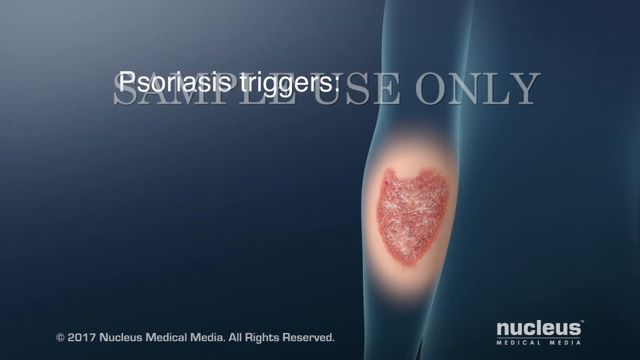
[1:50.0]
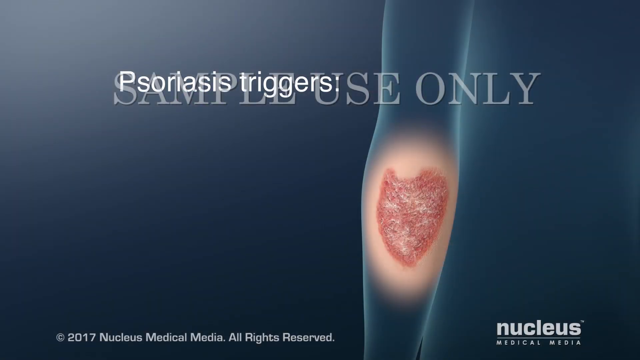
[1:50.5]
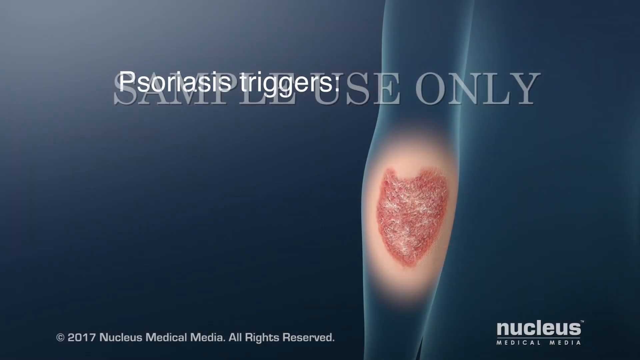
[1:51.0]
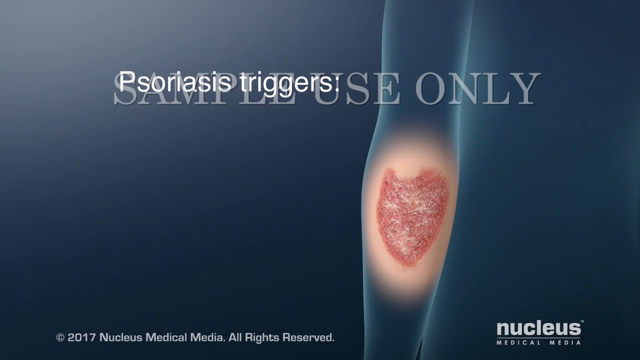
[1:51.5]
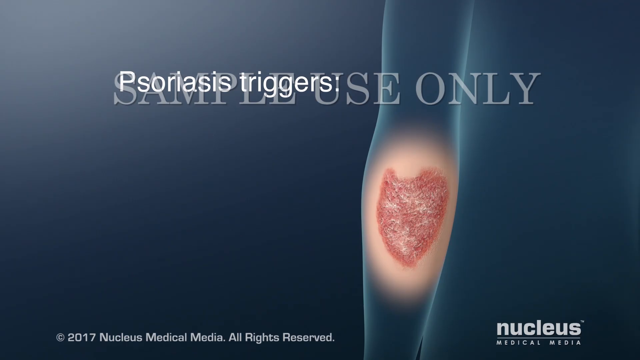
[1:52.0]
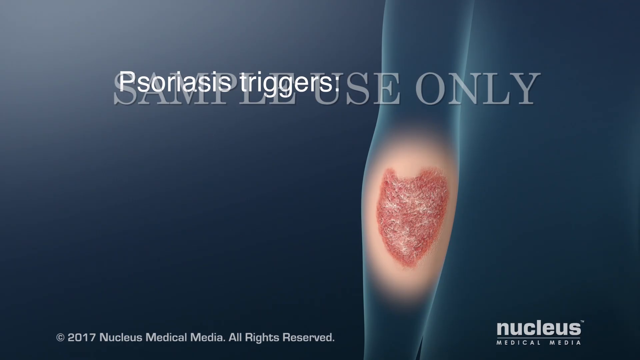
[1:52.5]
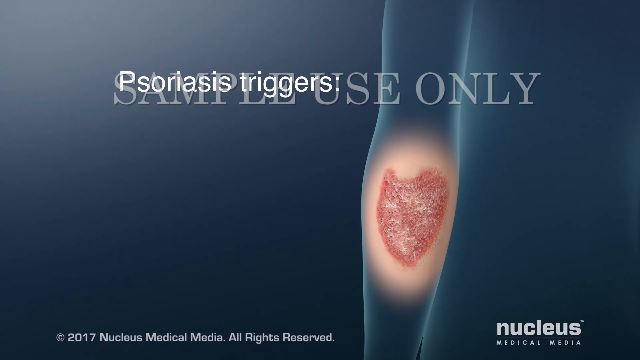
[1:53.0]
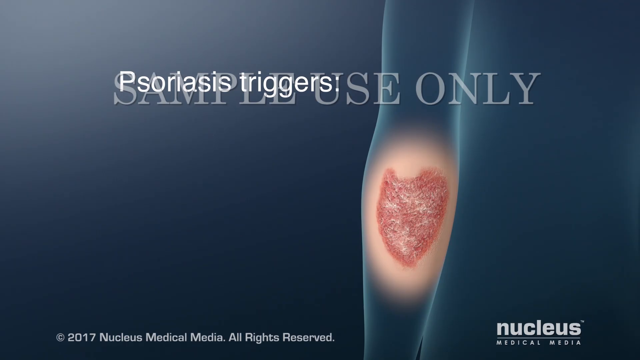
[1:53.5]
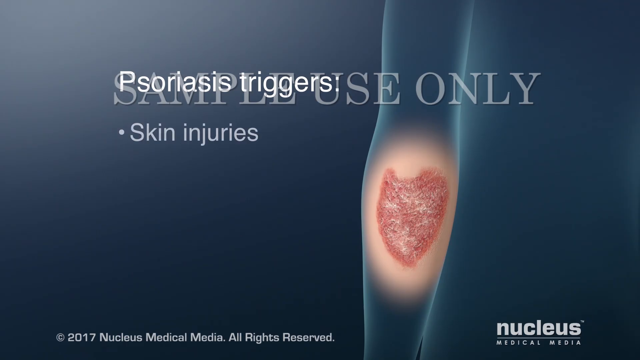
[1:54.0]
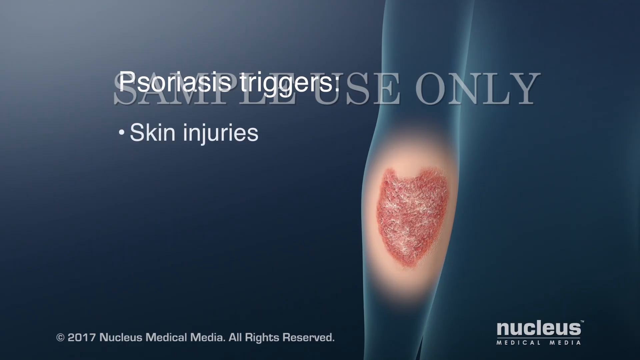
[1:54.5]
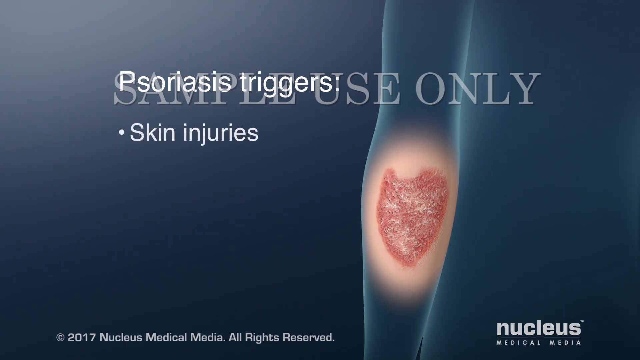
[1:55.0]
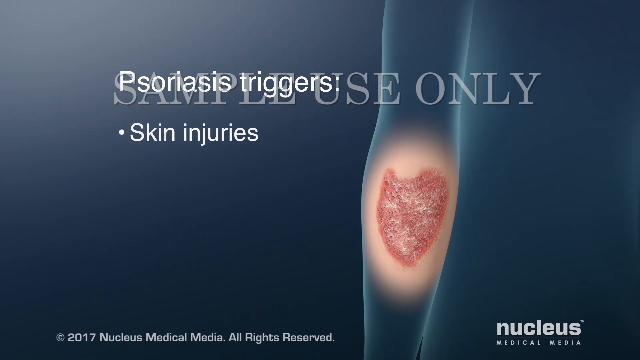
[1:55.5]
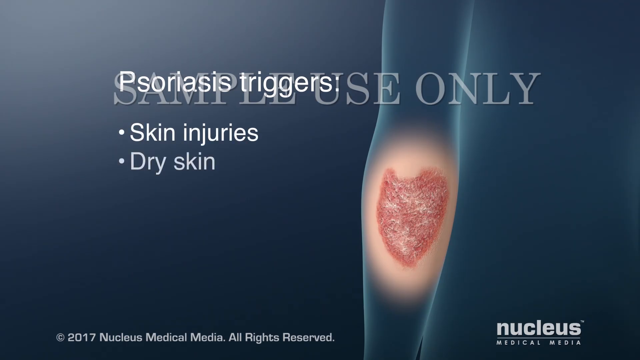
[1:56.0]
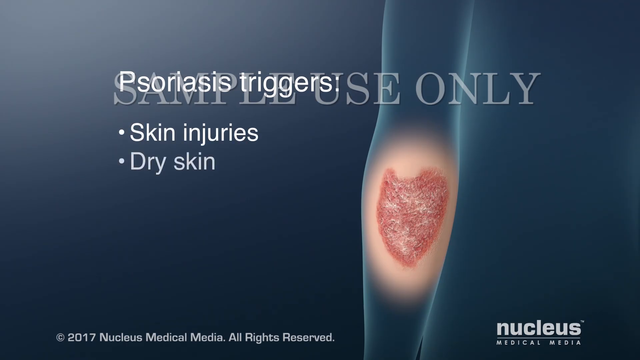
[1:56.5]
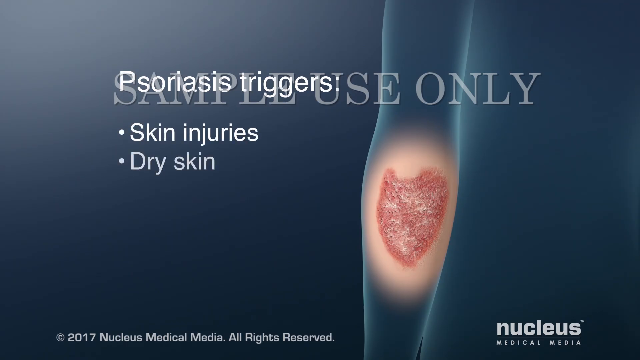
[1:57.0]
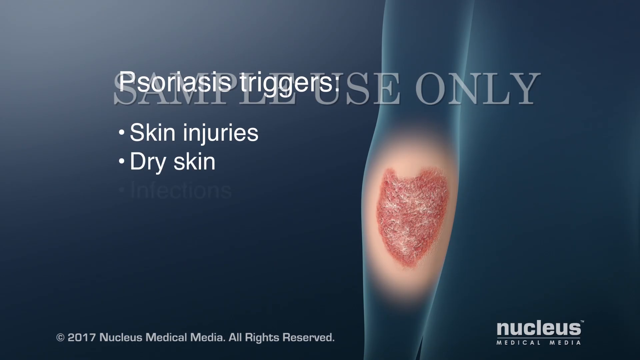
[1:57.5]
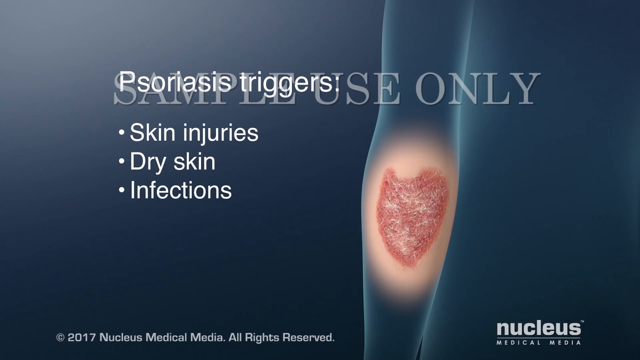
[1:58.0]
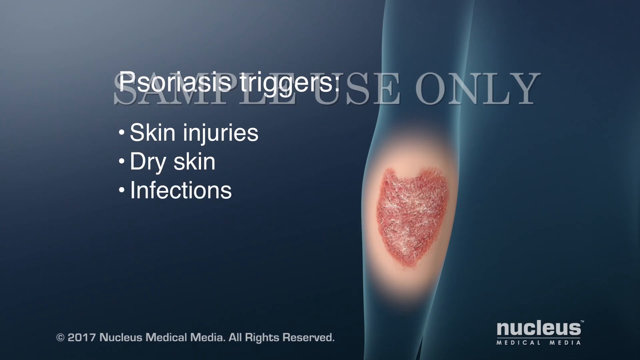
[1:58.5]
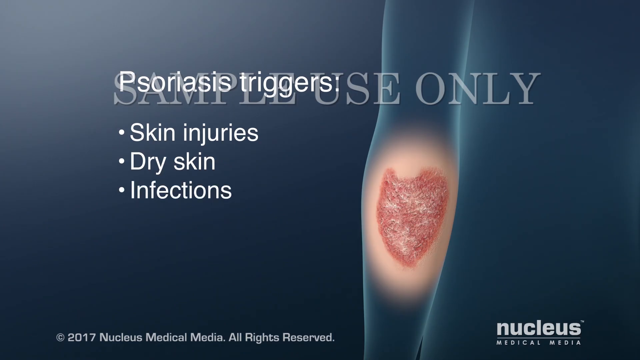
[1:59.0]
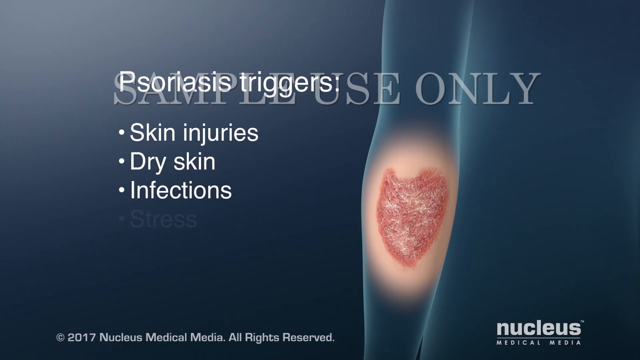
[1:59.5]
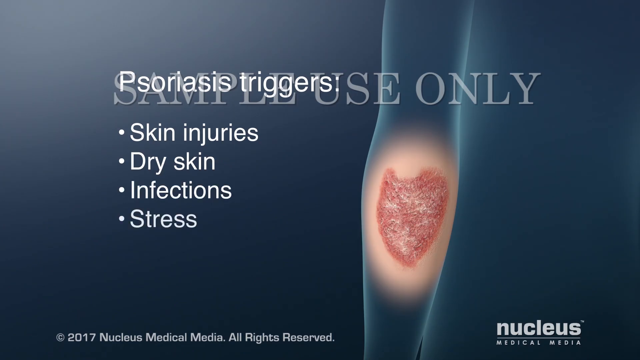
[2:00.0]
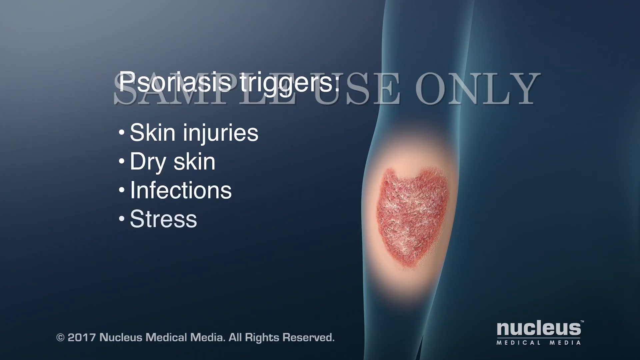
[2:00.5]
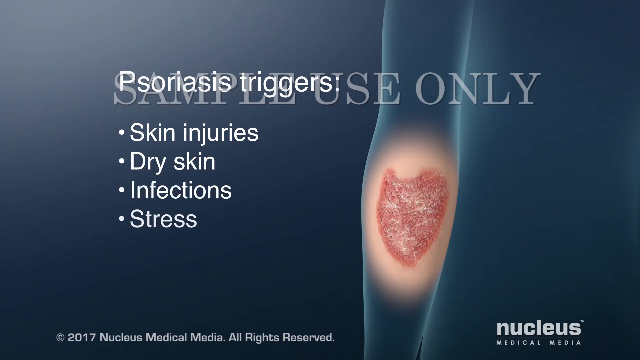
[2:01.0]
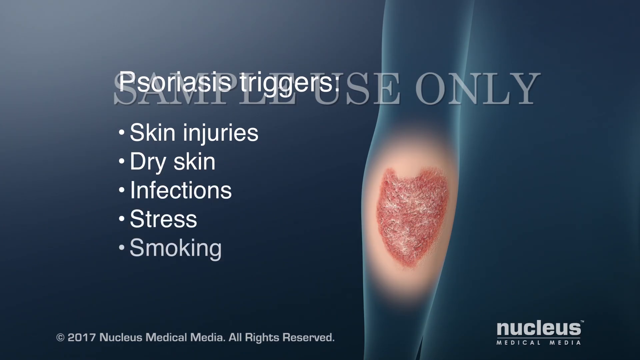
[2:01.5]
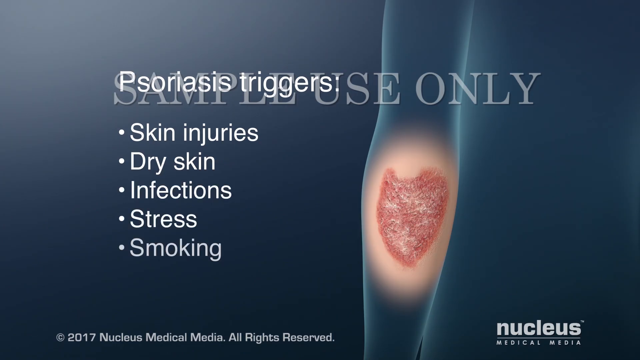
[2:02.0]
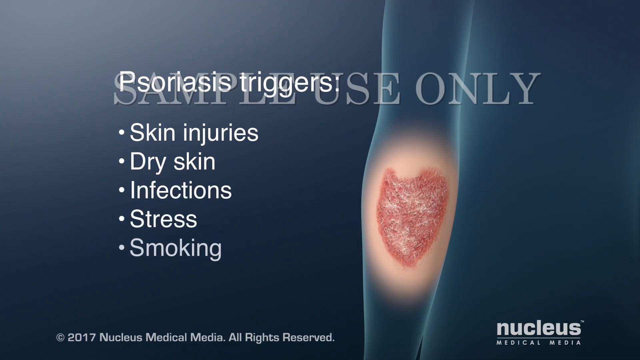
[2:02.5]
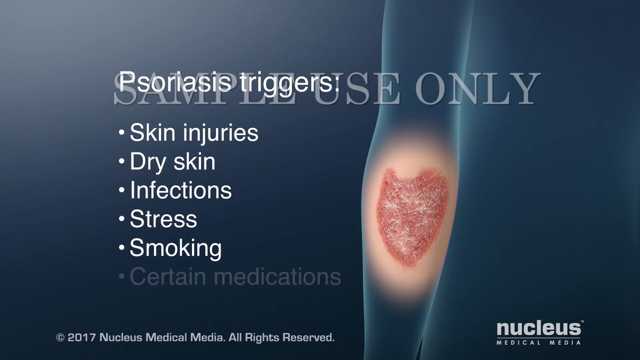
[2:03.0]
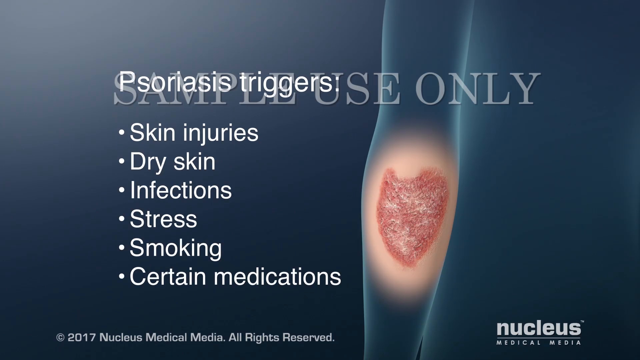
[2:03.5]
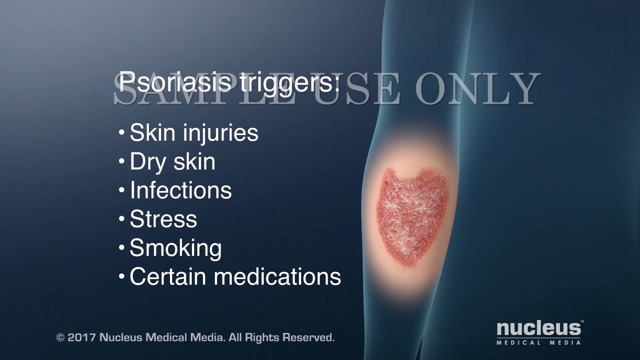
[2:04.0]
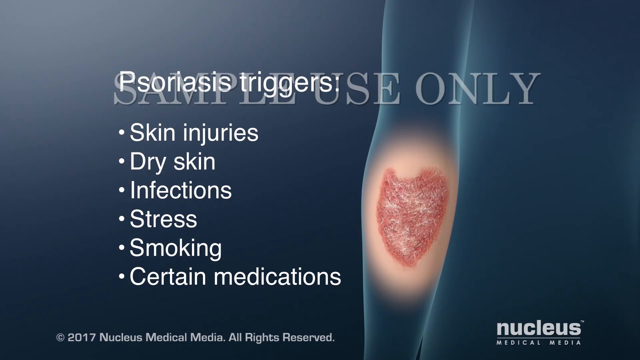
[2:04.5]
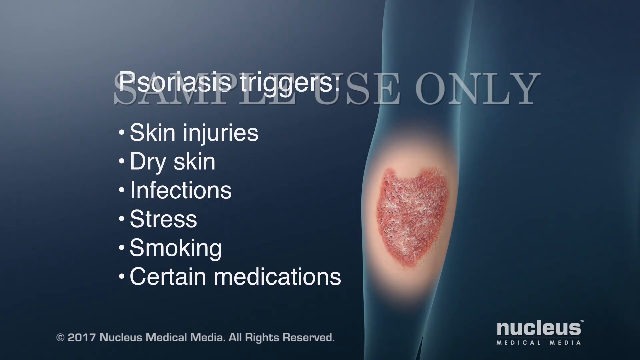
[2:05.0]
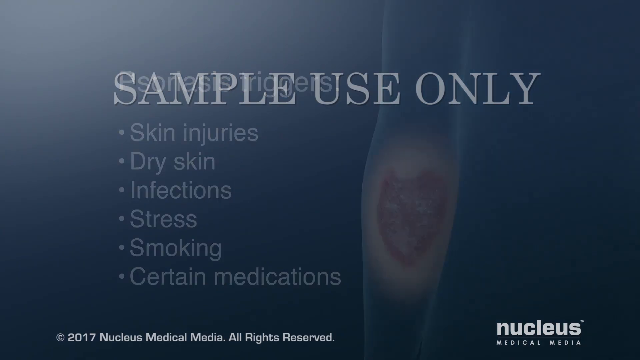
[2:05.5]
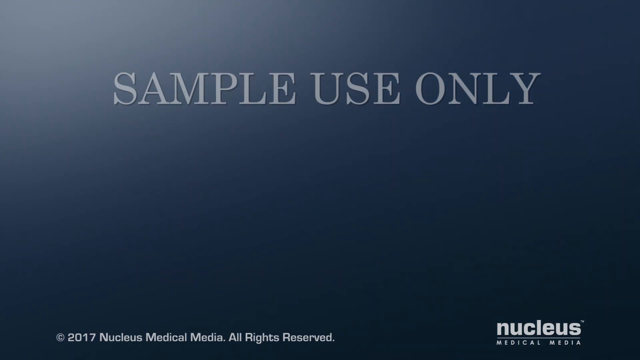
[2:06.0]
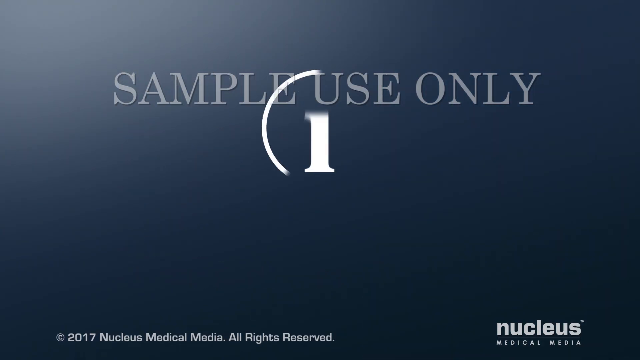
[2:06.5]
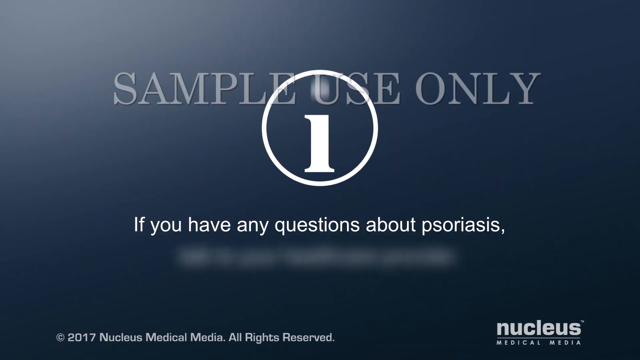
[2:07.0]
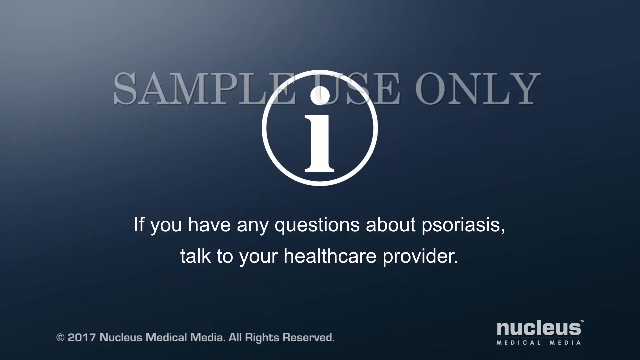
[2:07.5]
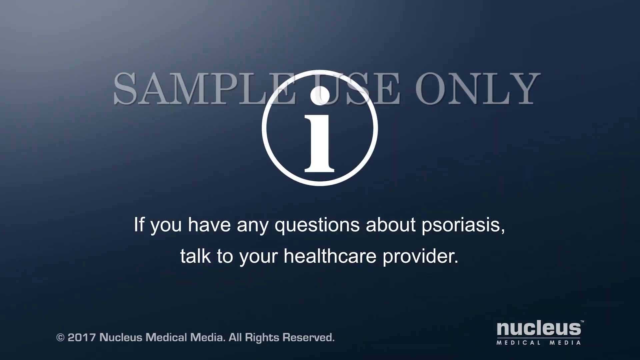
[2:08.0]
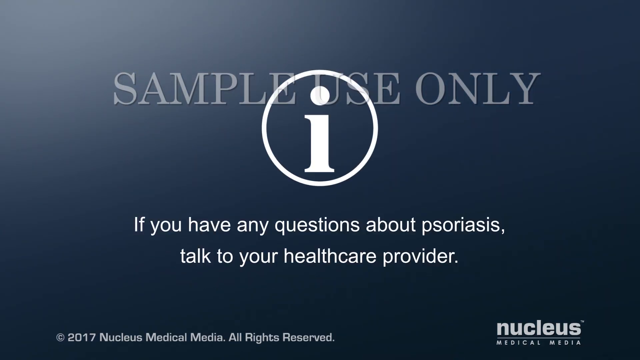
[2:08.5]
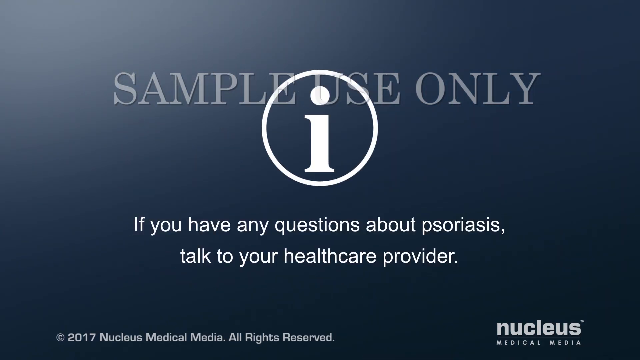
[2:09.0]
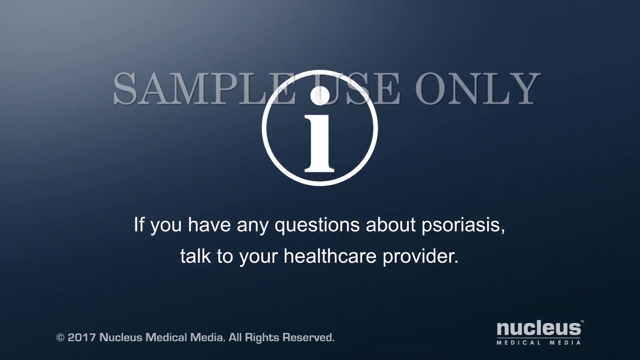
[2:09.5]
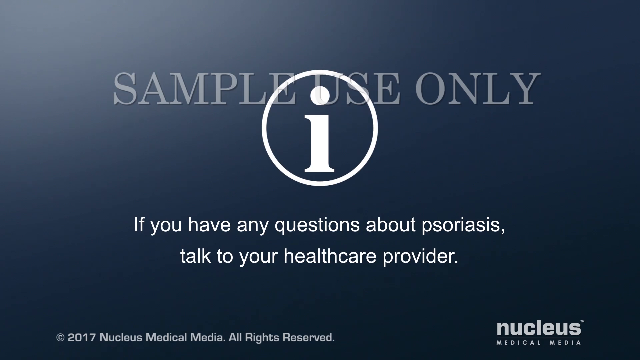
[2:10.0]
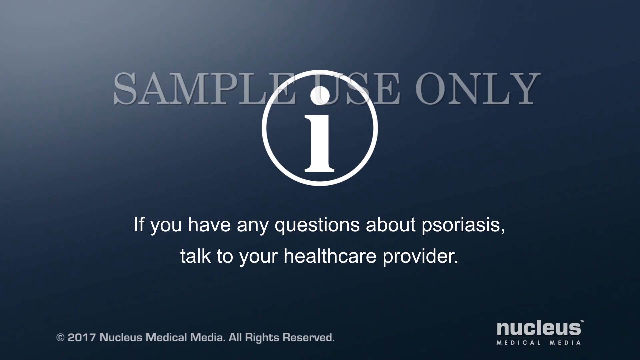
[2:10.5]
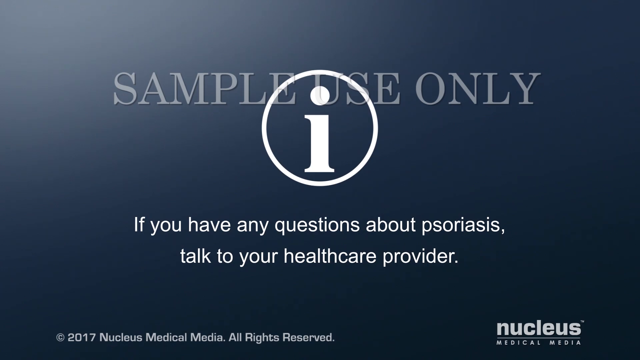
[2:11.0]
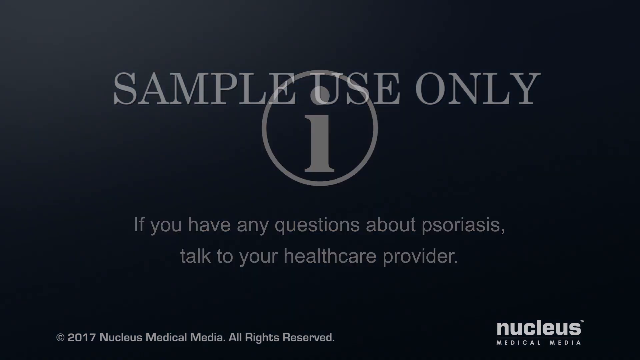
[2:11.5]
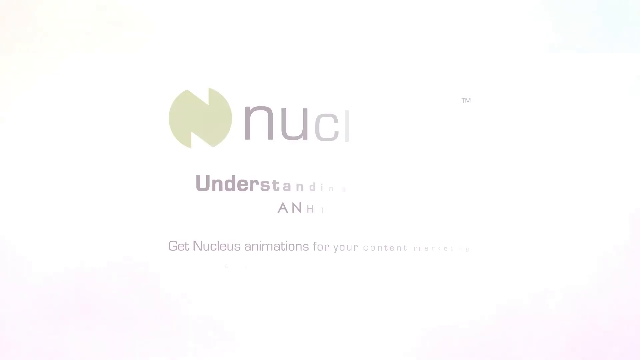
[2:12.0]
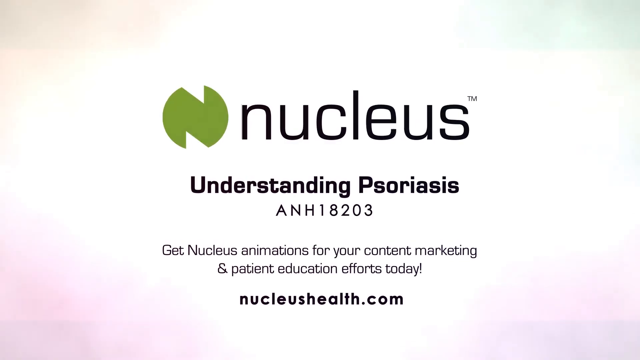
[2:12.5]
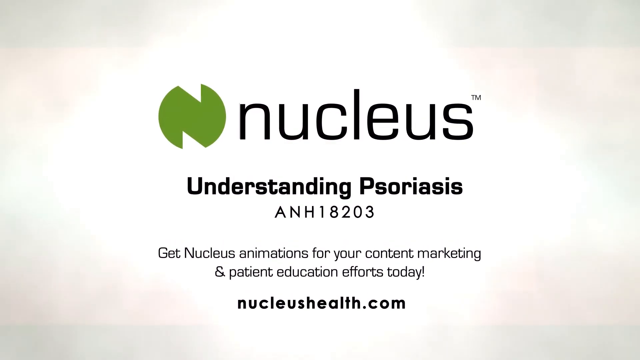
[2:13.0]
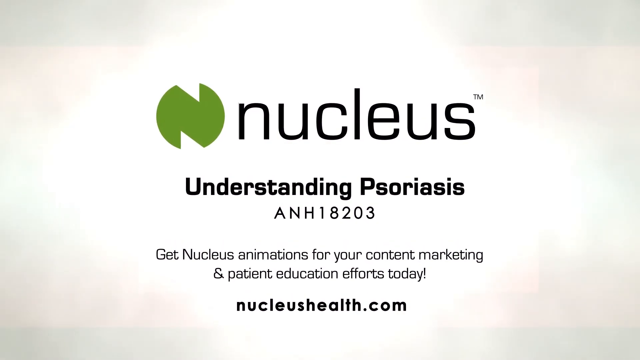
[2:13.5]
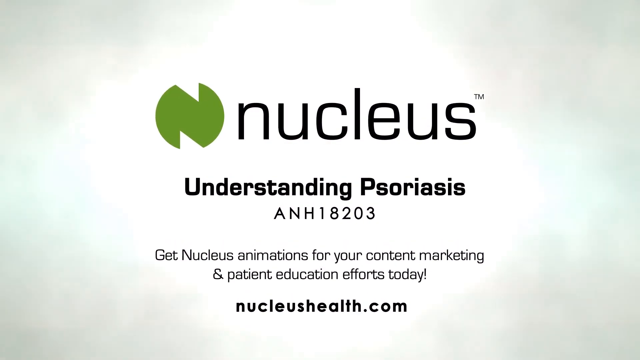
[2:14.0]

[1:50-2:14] The view returns to the outside of the body, and then the triggers for psoriasis are listed: skin injuries, dry skin, infections, stress, smoking, and certain medications. A screen then says "if you have any questions about psoriasis, talk to your health care provider." The video appears to be from NucleusHealth.com. The title "Understanding psoriasis" appears, followed by "Get Nucleus animations for your content marketing and patient education efforts today."